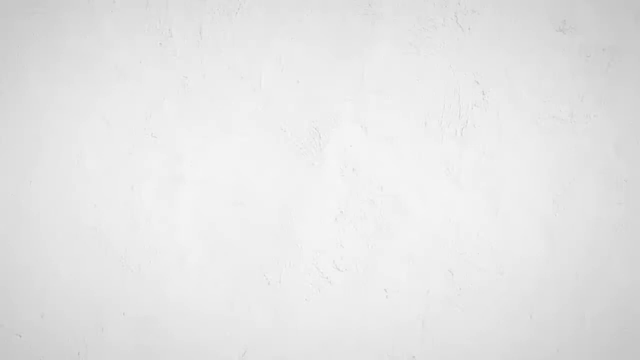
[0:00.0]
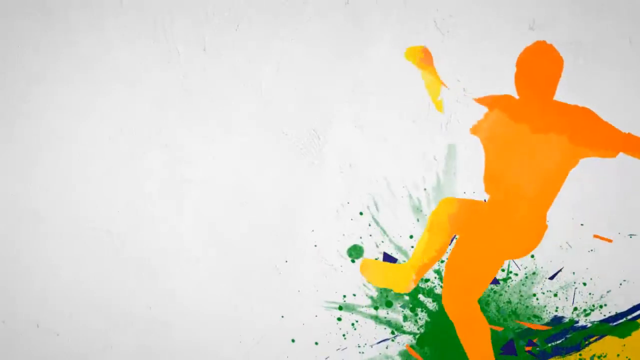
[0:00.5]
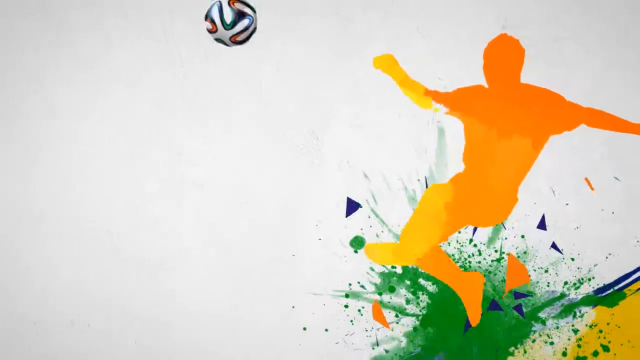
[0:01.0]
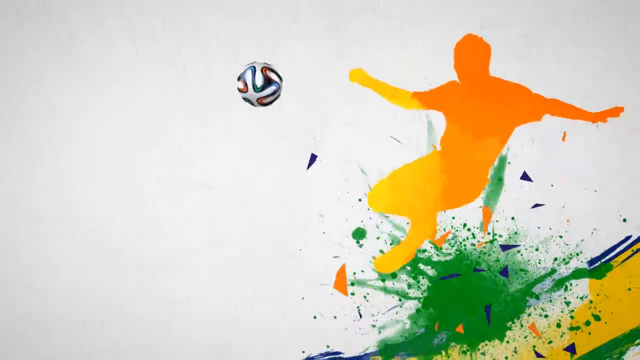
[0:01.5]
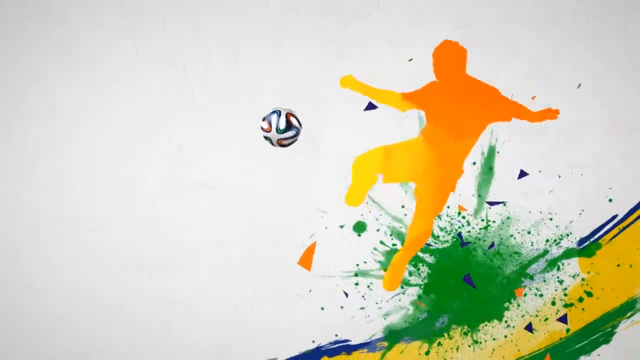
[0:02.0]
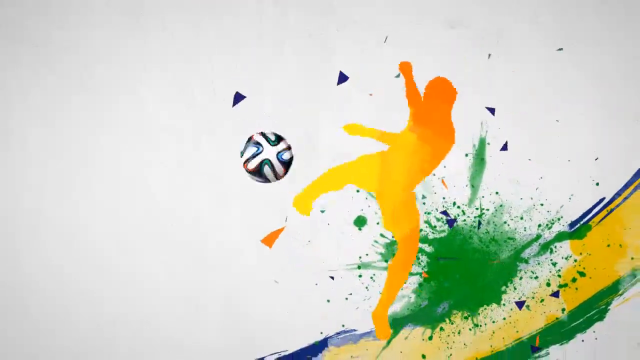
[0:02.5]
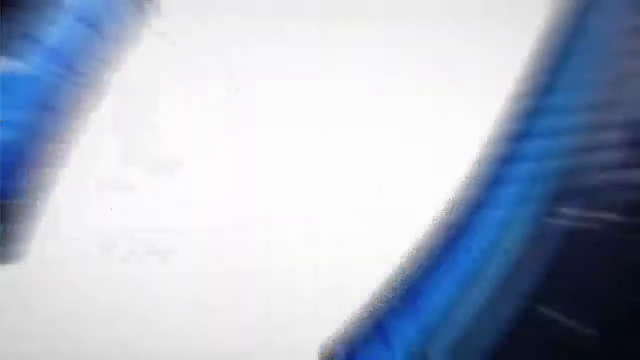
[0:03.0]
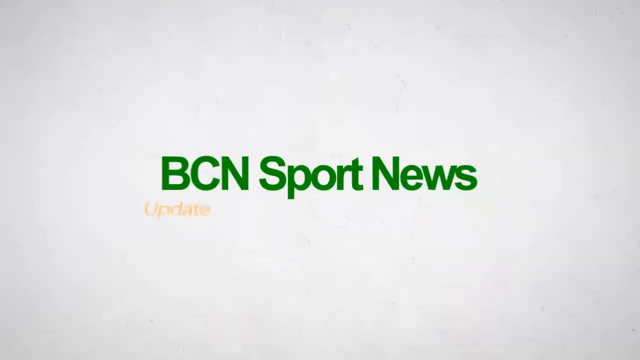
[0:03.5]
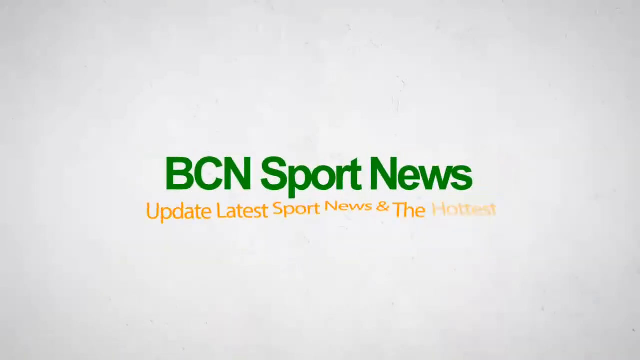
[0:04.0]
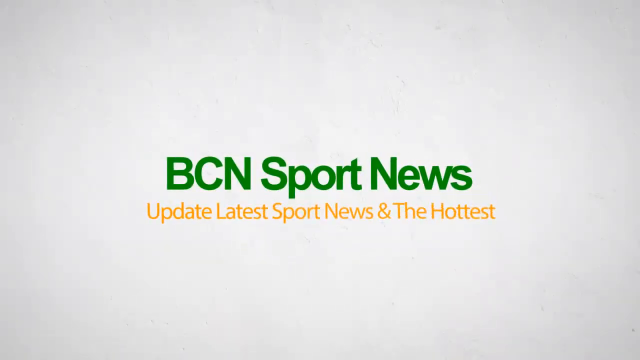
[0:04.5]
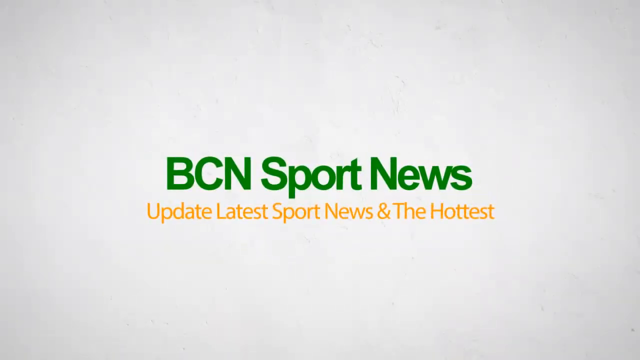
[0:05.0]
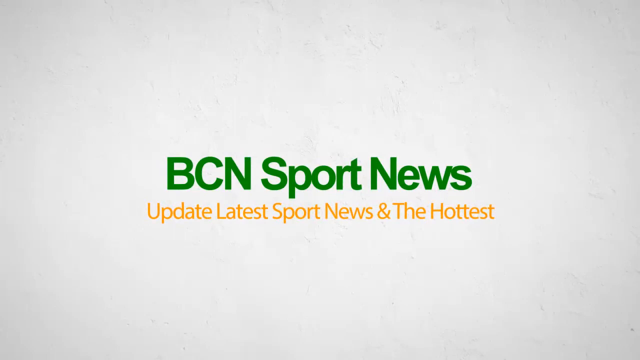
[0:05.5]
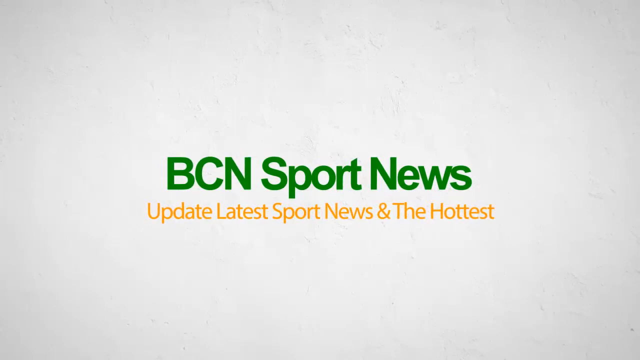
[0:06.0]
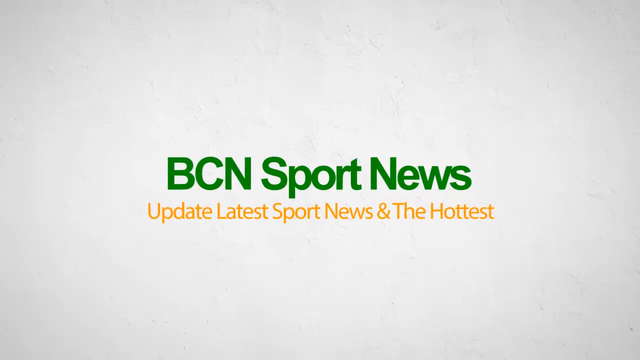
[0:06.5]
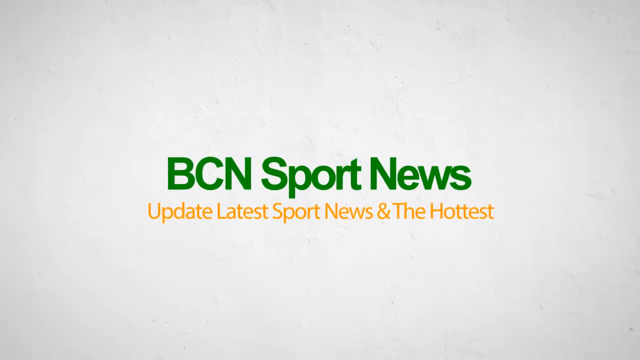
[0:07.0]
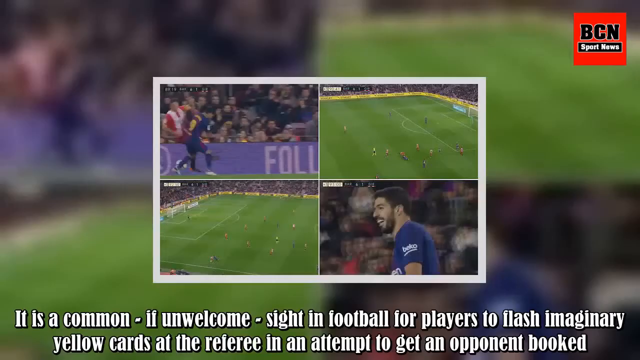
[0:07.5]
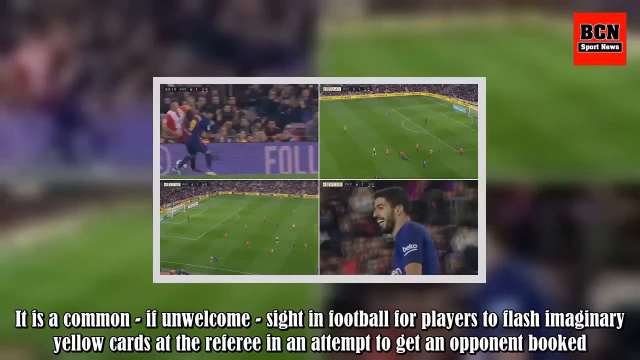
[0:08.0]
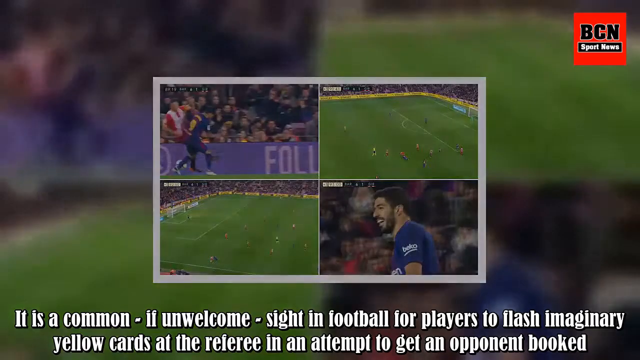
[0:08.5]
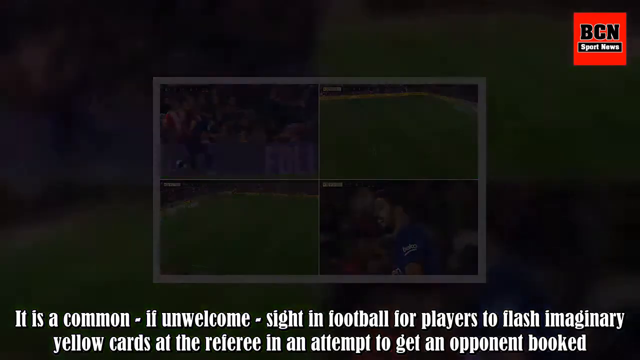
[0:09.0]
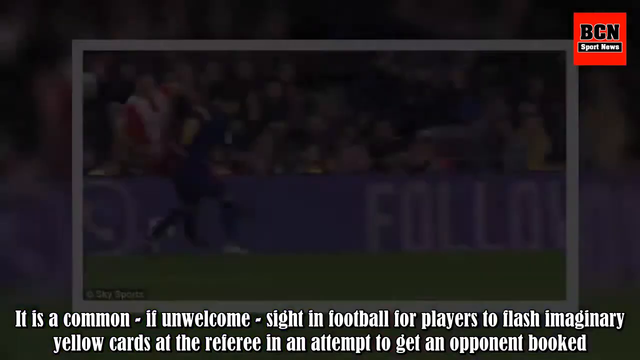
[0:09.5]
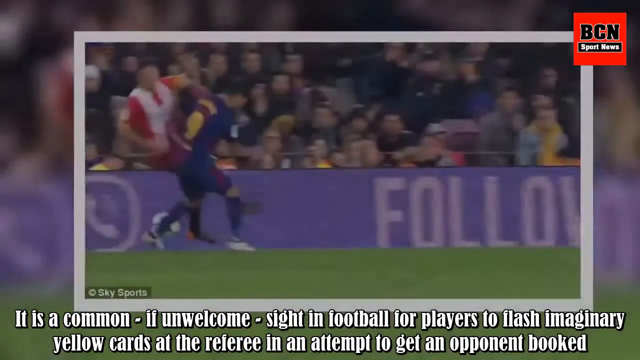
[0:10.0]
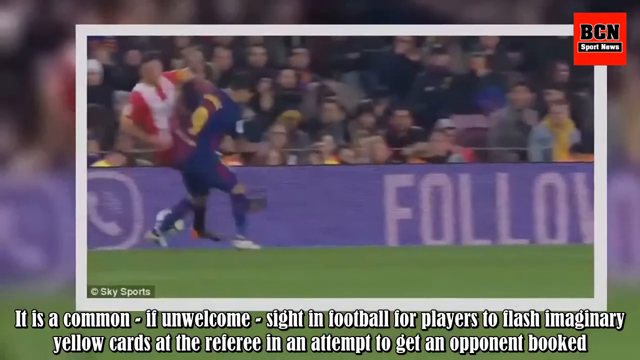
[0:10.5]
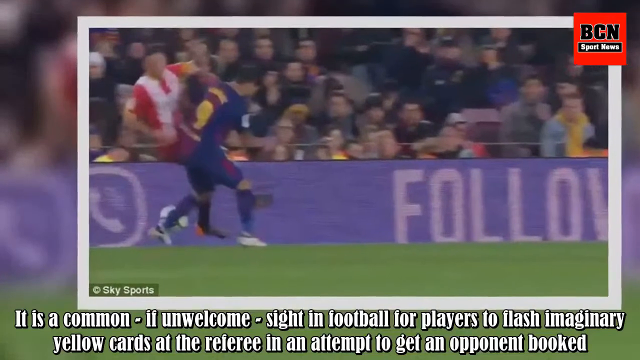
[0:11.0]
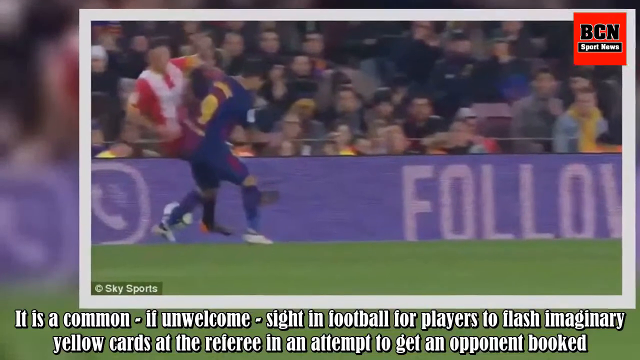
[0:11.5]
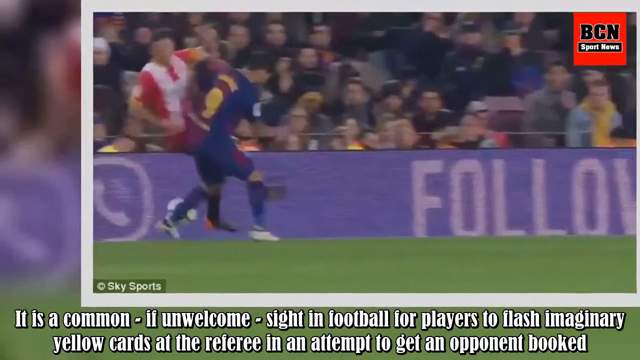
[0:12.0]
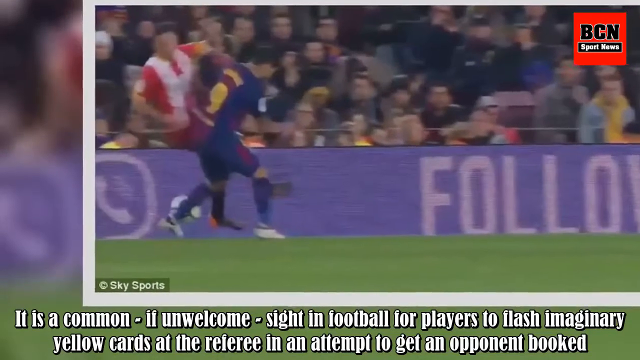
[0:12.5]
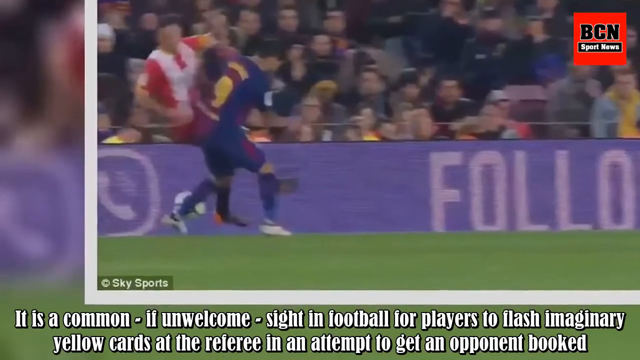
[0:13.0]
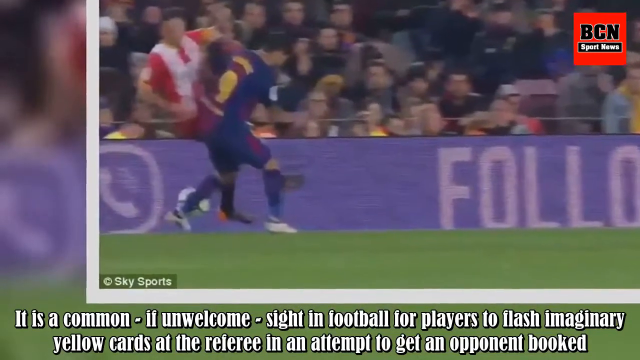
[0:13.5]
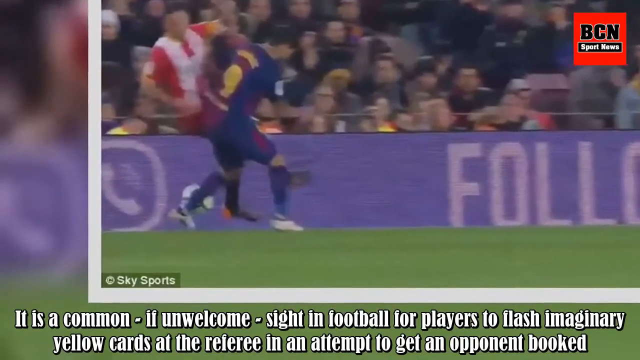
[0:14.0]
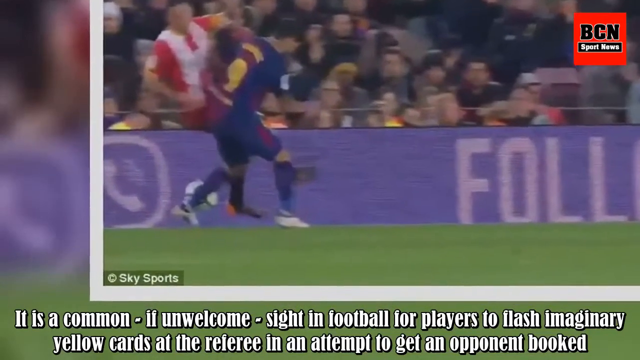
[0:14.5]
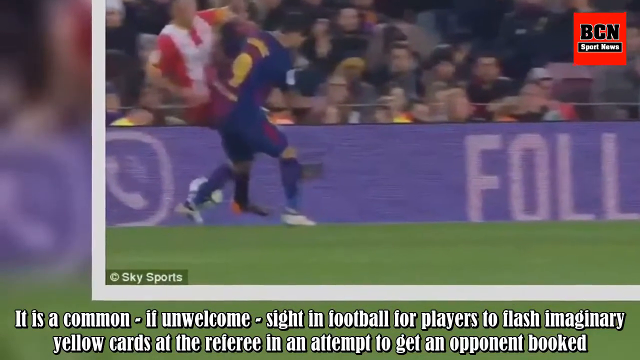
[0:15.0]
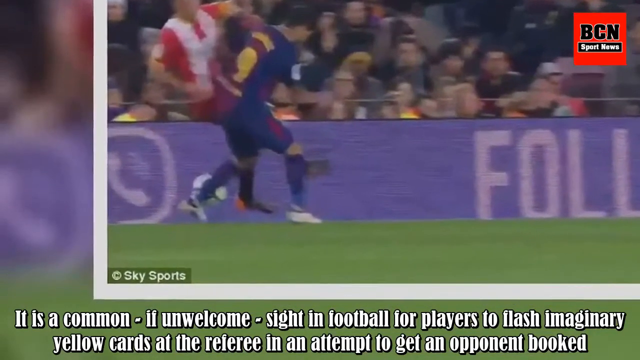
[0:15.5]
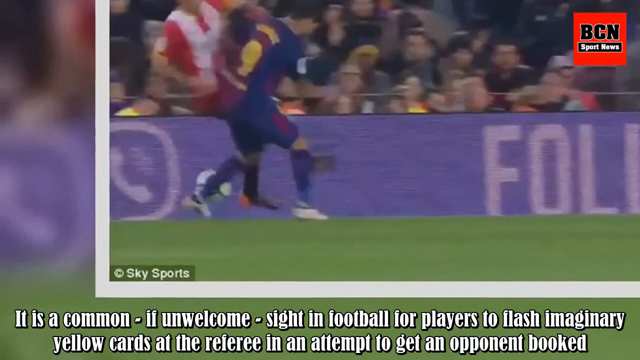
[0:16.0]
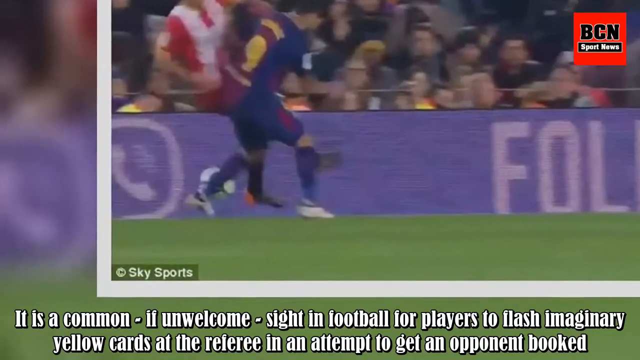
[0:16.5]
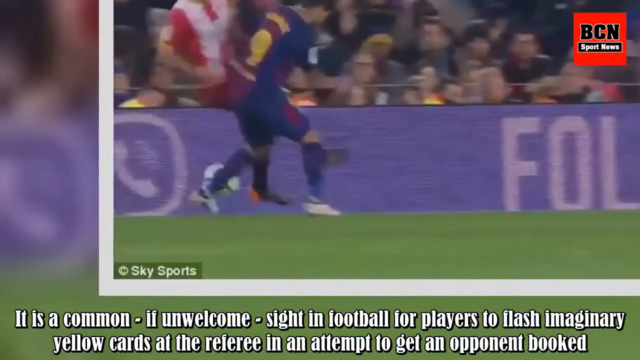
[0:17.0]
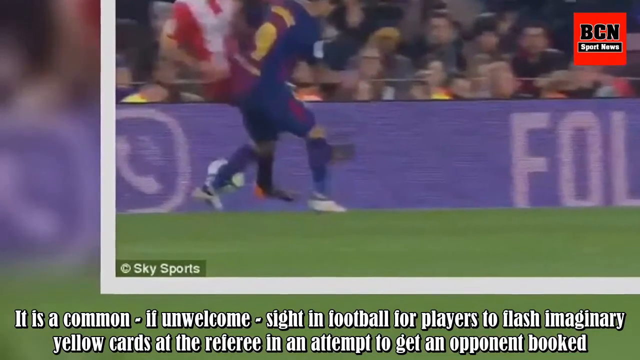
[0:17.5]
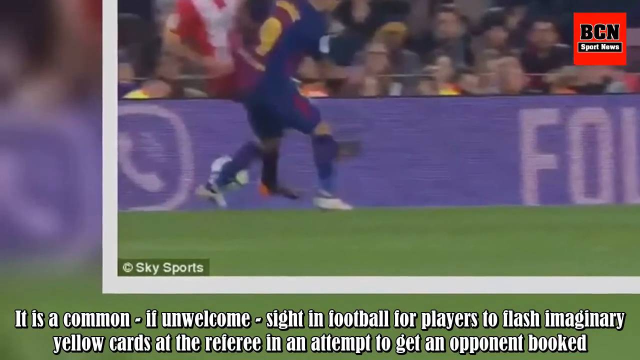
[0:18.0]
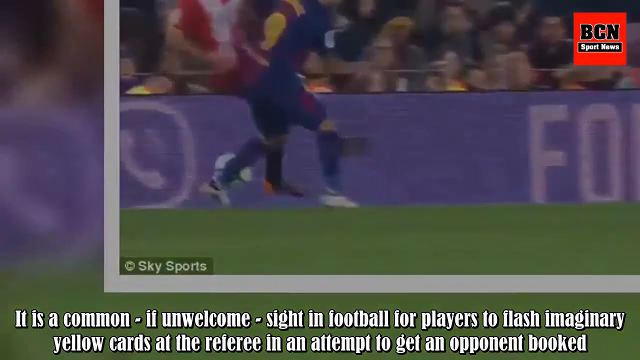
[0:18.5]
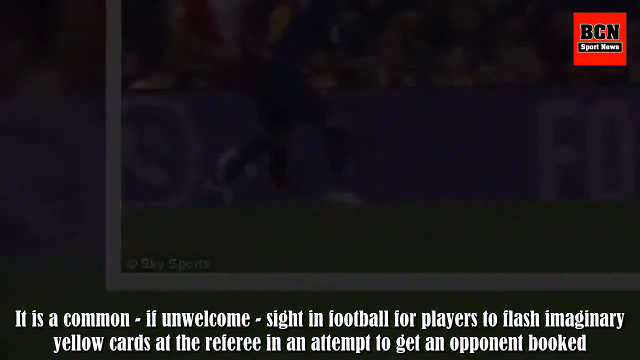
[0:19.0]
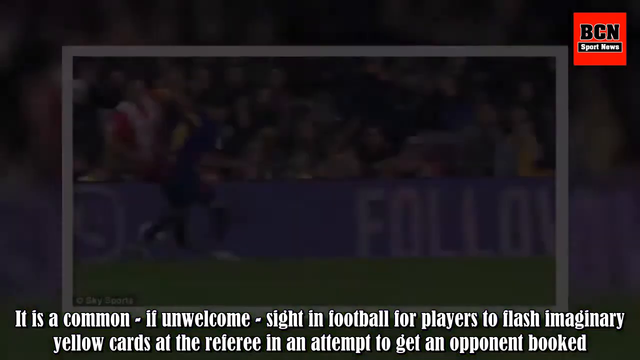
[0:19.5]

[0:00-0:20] At the start, clip art of somebody kicking a soccer ball appears, followed by the text "BCN sports news update" and "latest sports news and the hottest." Different pictures from what looks like some sort of soccer game follow, with the text "it is common if unwelcome sight in football for players to flash imaginary yellow cards at the referee in an attempt to get an opponent booked." More pictures and images of players at the game appear. What looks like a player in a blue and purple jersey comes after a player in a red jersey, and the player in red appears to get knocked over as the ball is kicked out from under him. It is a live game, with audience members in the stadium.